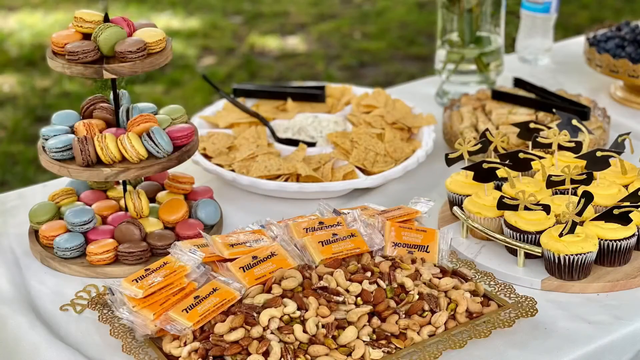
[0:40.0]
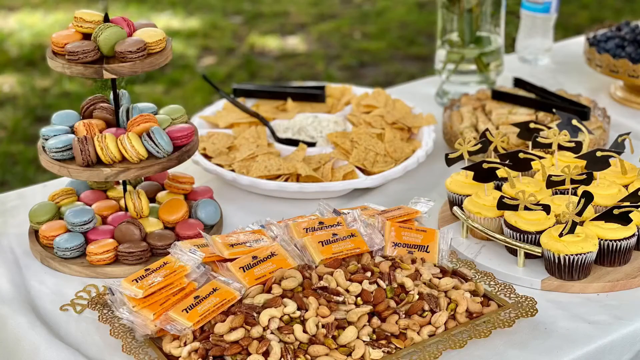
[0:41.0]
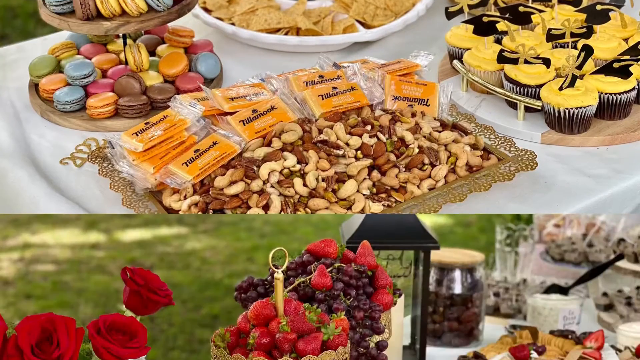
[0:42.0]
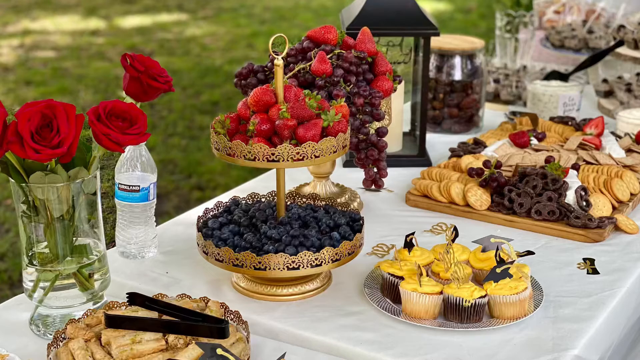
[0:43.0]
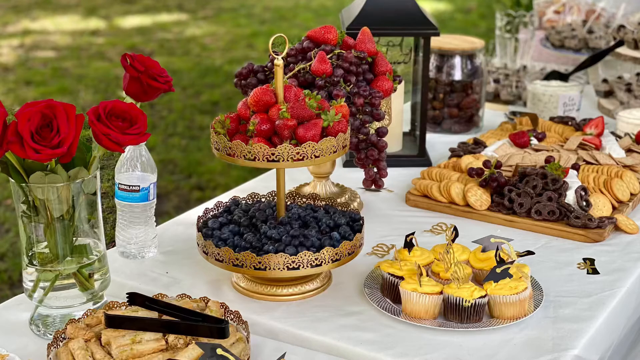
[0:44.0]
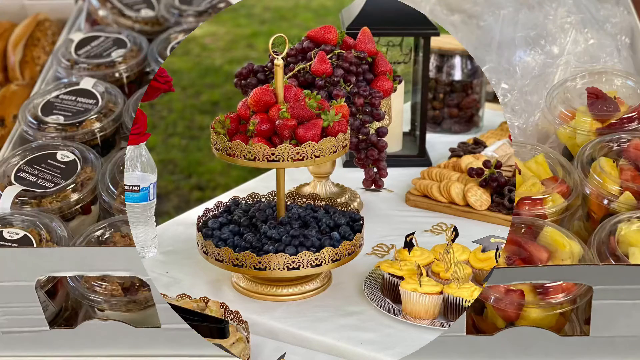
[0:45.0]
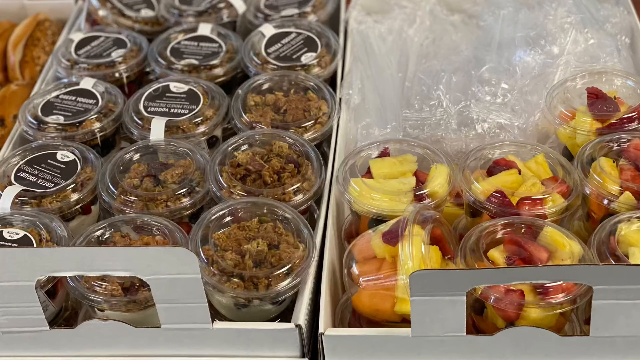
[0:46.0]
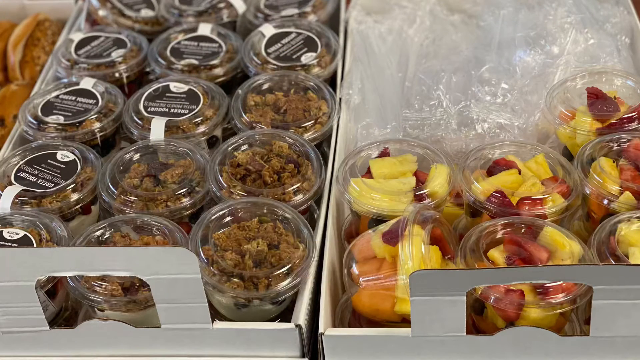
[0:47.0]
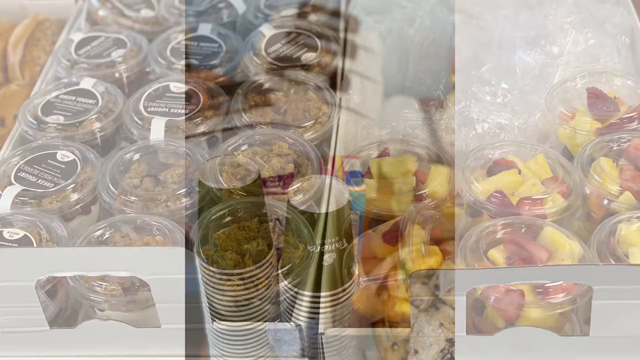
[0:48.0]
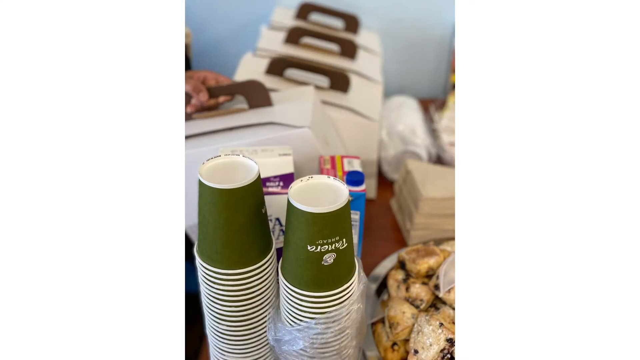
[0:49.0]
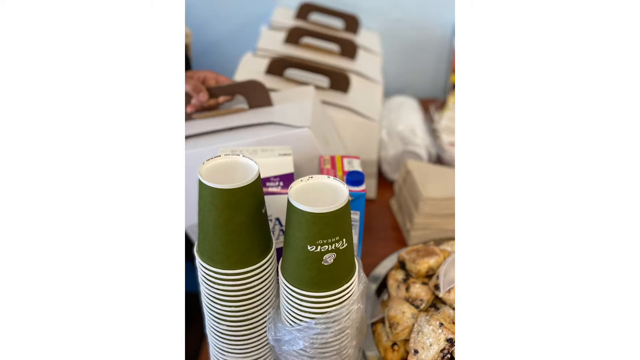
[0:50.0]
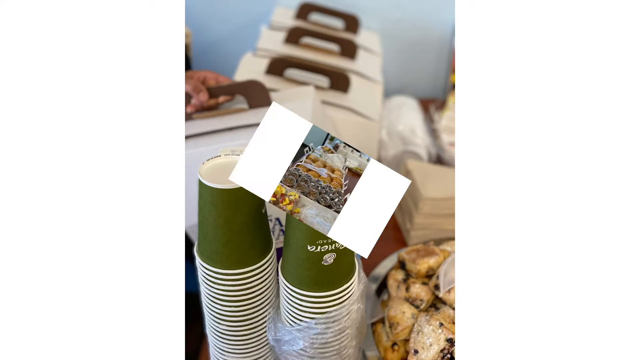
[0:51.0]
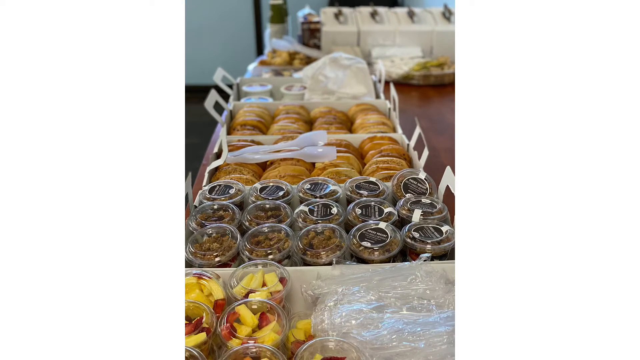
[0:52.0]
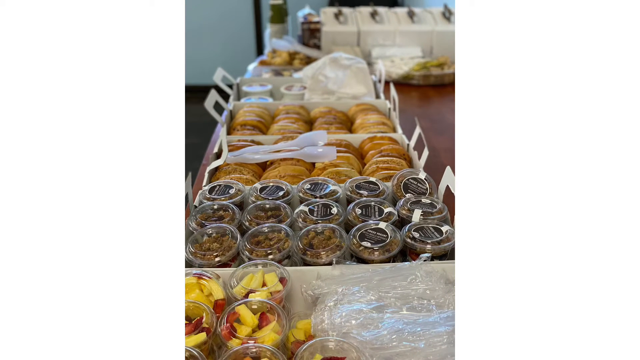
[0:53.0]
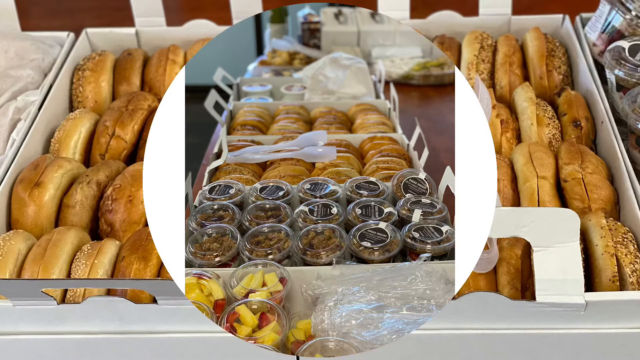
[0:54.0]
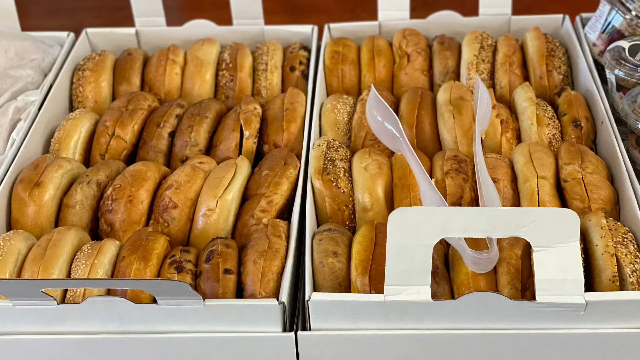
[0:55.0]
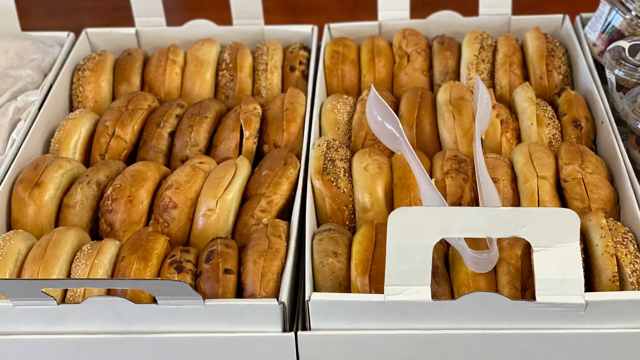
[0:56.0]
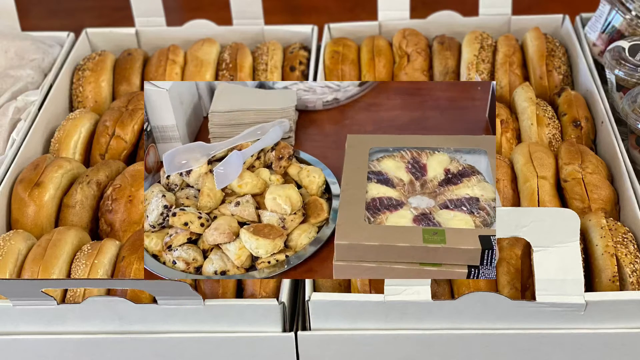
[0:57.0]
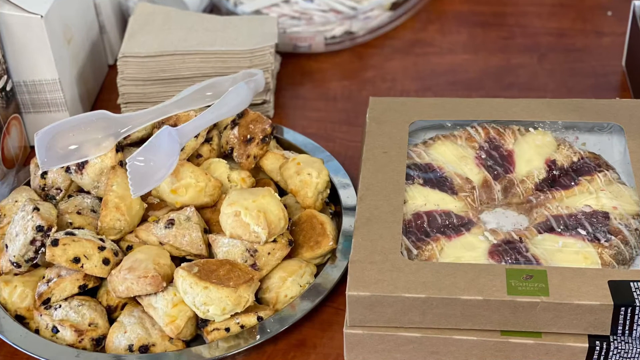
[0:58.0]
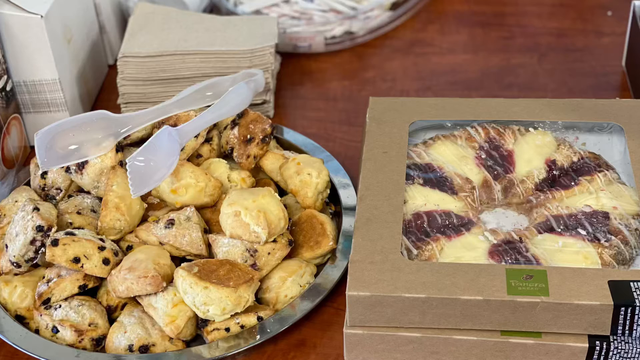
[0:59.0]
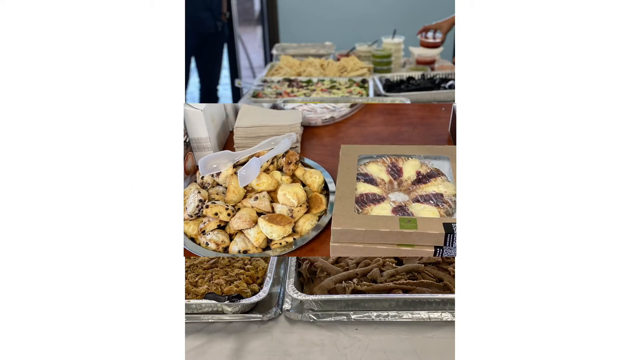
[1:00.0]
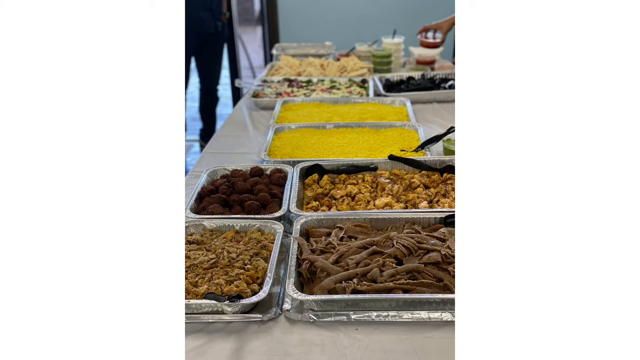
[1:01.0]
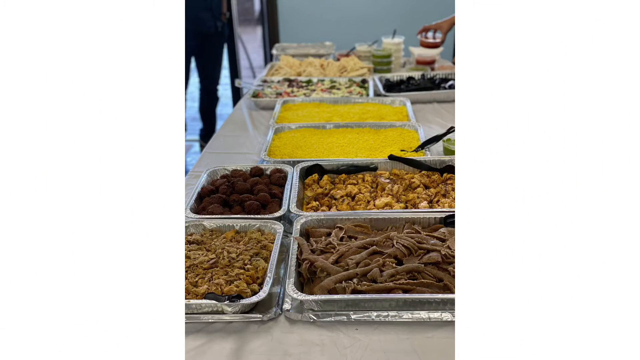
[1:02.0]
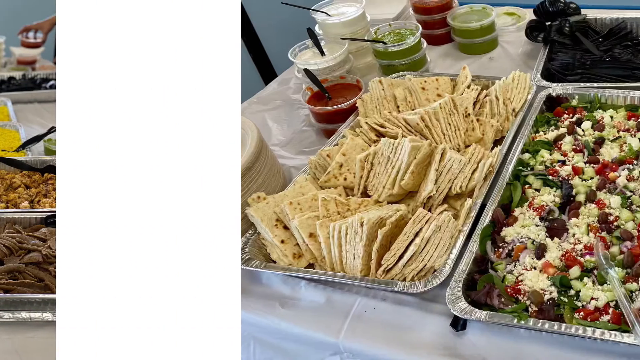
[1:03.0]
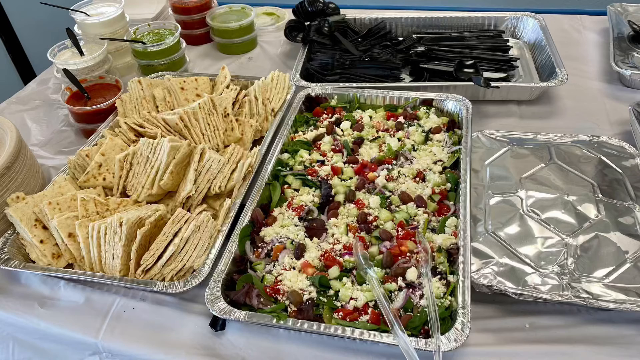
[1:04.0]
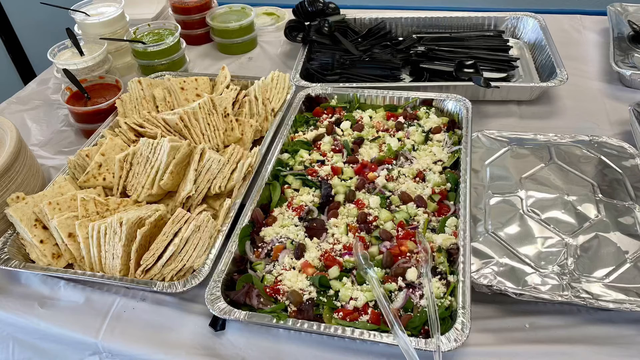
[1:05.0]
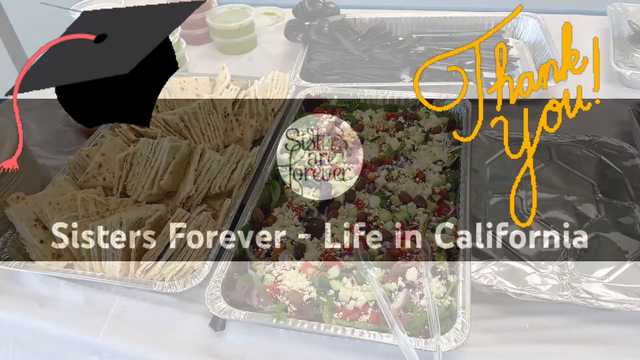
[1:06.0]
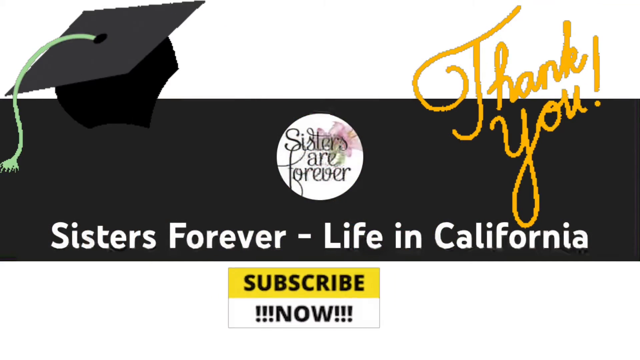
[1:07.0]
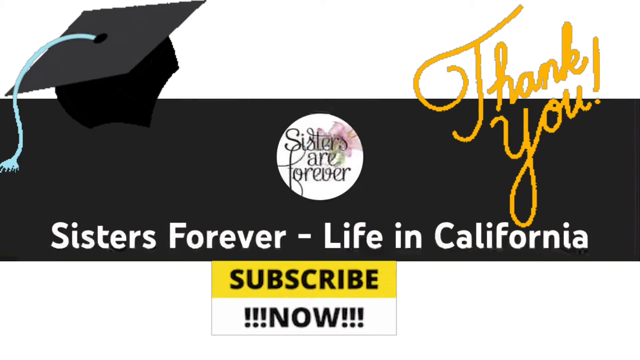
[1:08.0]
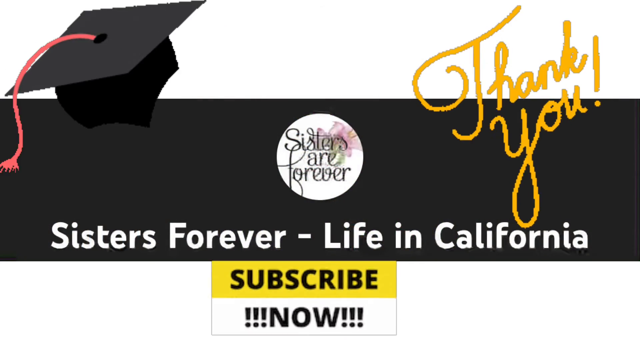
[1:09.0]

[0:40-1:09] There is a lot of cheese and nuts, along with fruit bowls and a lot of fruit. The food appears to be catered, apparently with a label that says possibly Panera, and there is what looks like breakfast of bagels and fruit. A wide variety of bagels is on display, with quite a few boxes of different bagels making up a huge assortment of pre-sliced bagels, and plastic tongs are there as well. Lots of pastries follow: cream cheese danishes, scones, what looks like some blueberry pastries, and lots of napkins. There is what looks like eggs, along with salads, pitas, and different sauces and dressings. At the end, text says "thank you sisters are forever life in California and subscribe now."